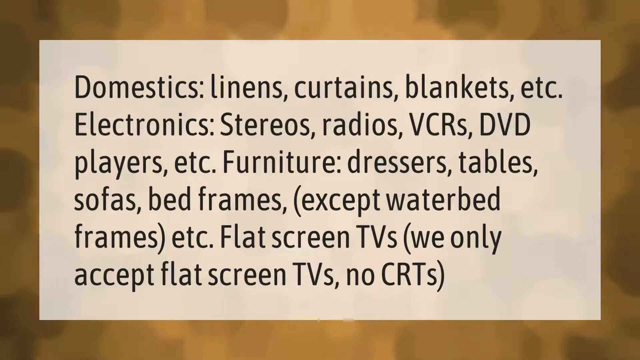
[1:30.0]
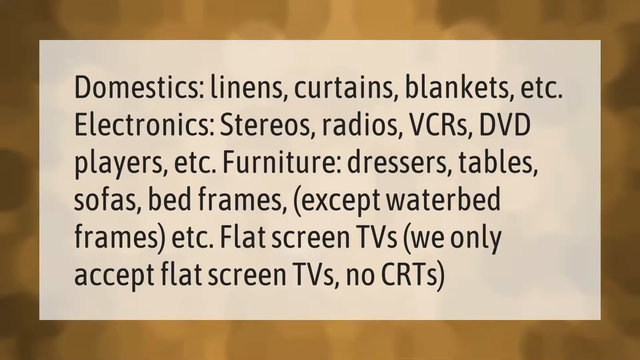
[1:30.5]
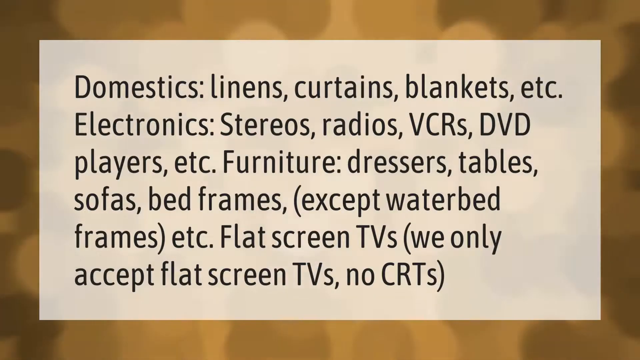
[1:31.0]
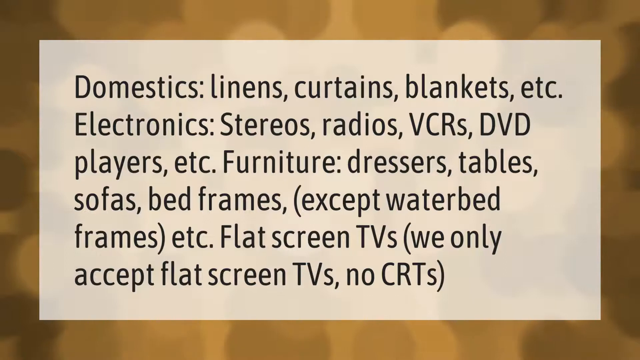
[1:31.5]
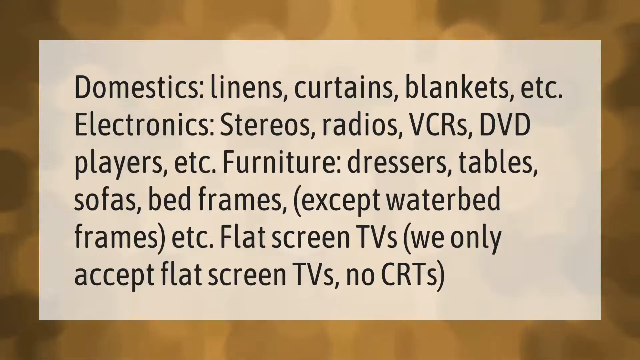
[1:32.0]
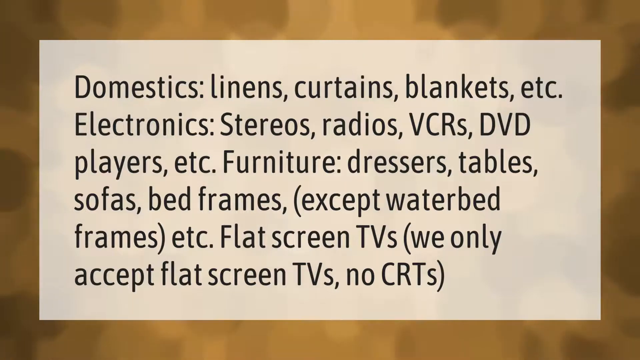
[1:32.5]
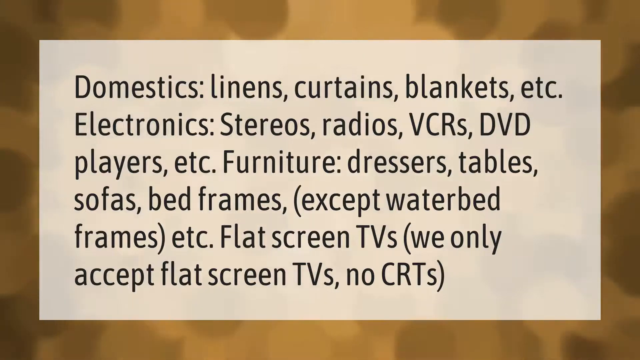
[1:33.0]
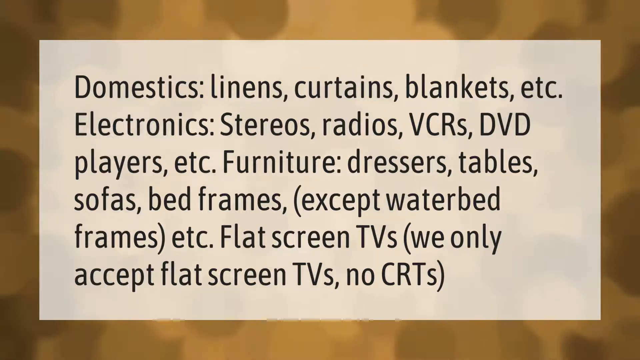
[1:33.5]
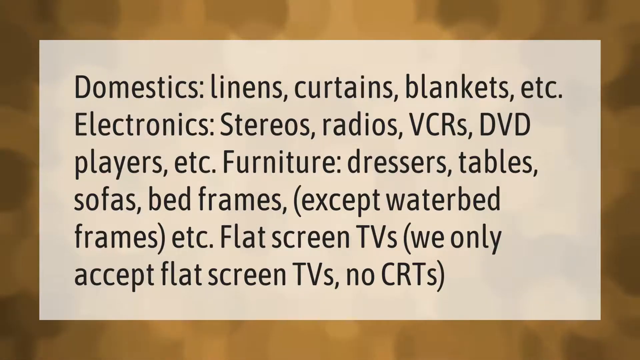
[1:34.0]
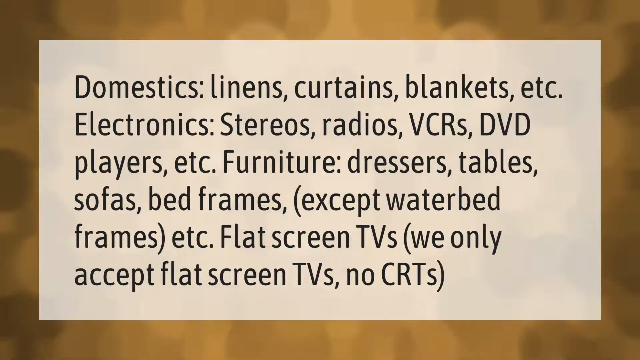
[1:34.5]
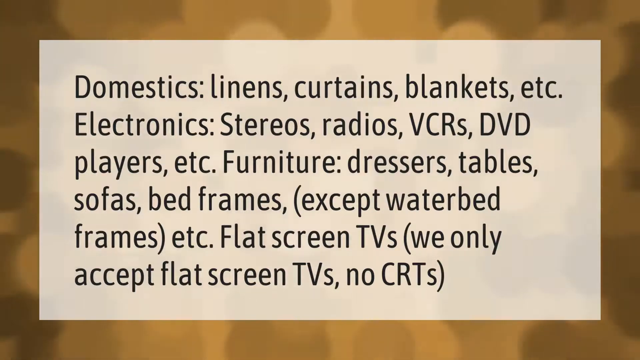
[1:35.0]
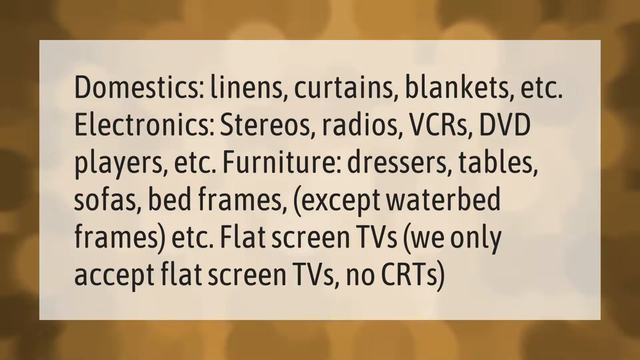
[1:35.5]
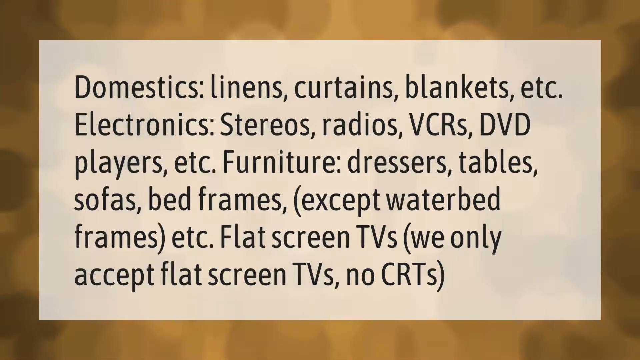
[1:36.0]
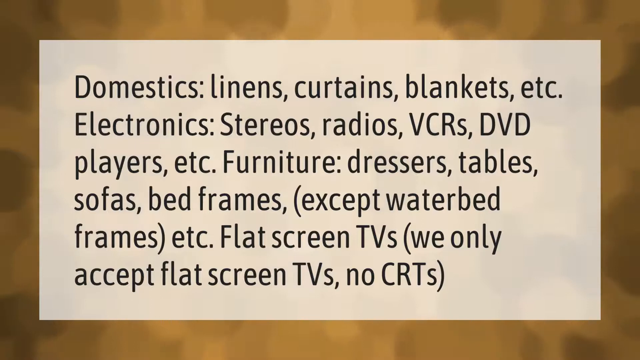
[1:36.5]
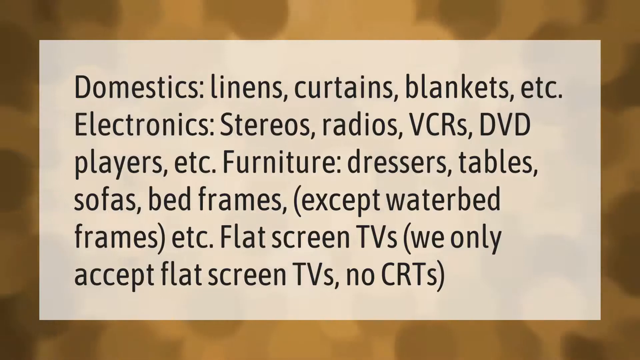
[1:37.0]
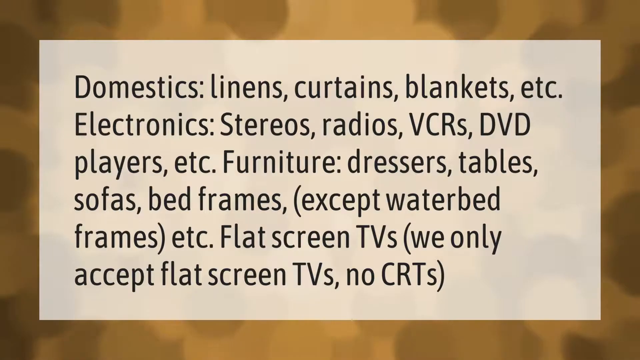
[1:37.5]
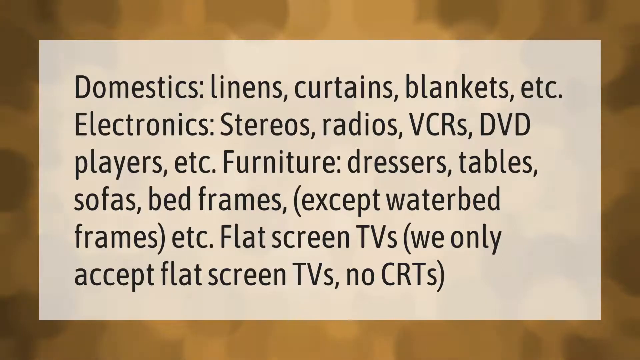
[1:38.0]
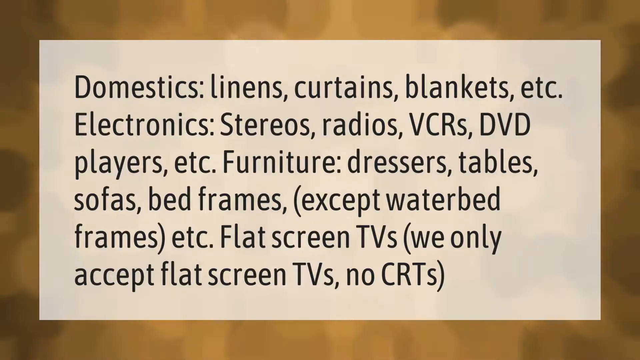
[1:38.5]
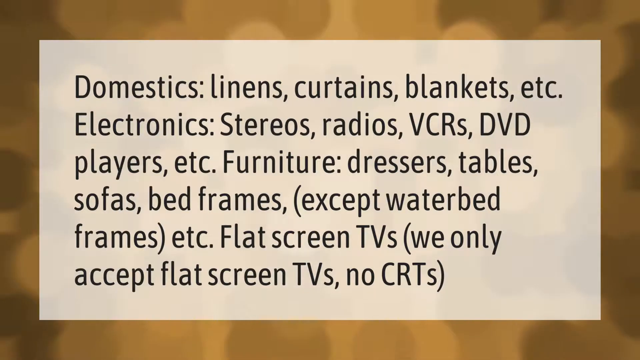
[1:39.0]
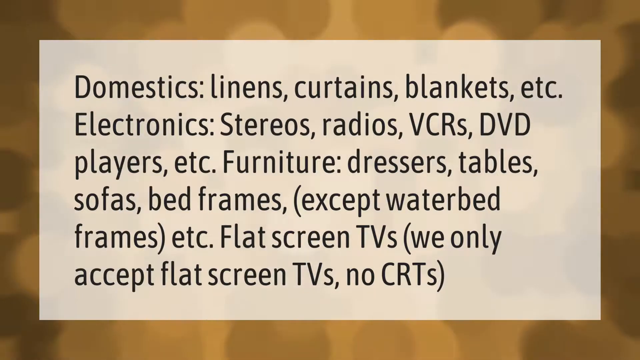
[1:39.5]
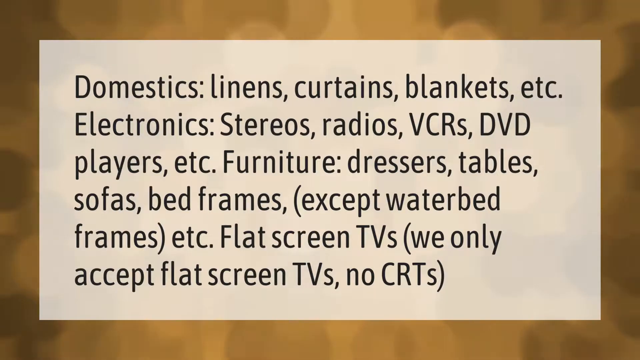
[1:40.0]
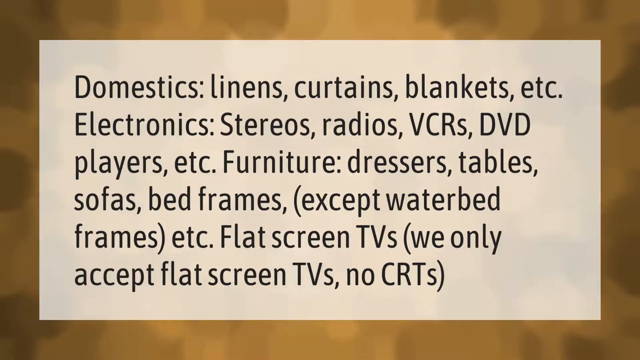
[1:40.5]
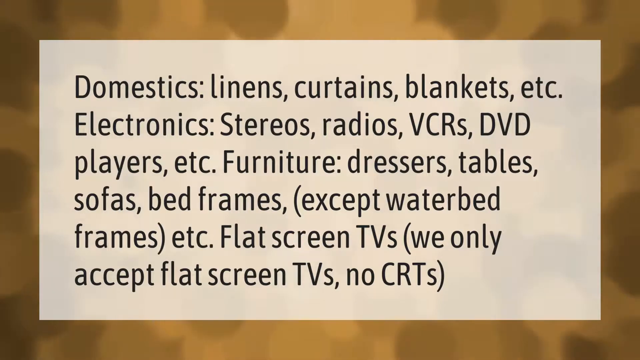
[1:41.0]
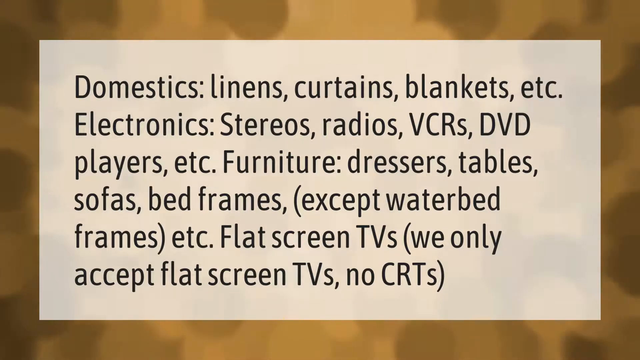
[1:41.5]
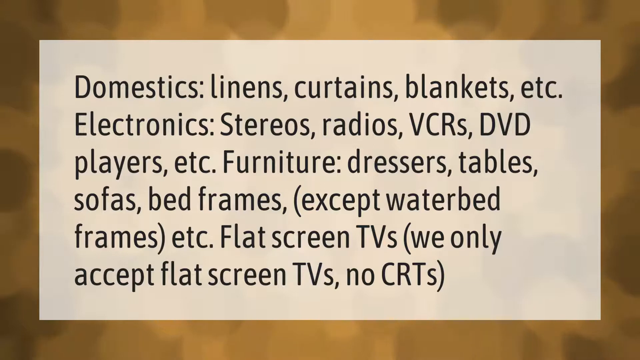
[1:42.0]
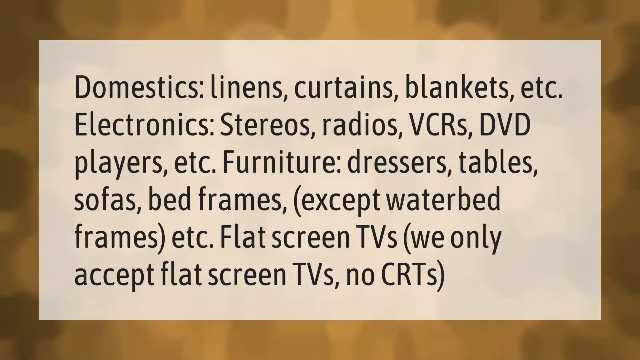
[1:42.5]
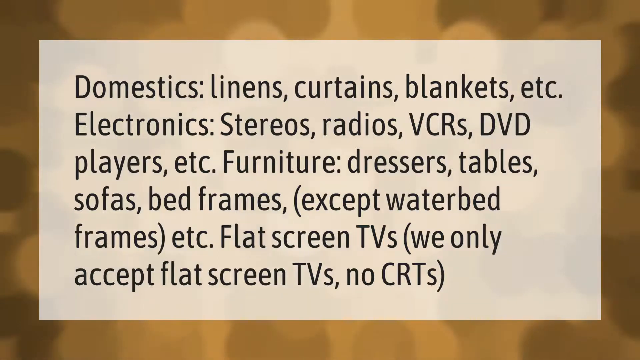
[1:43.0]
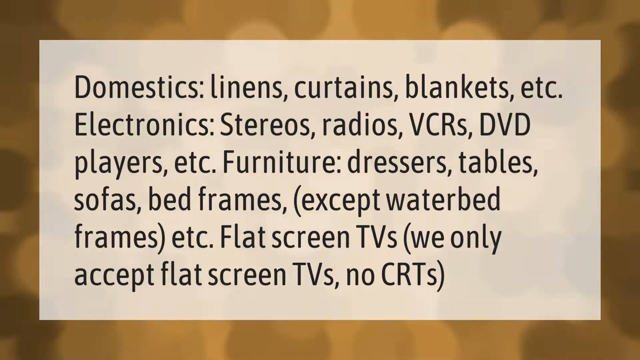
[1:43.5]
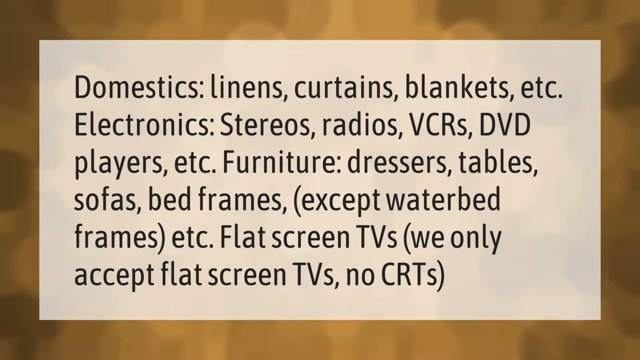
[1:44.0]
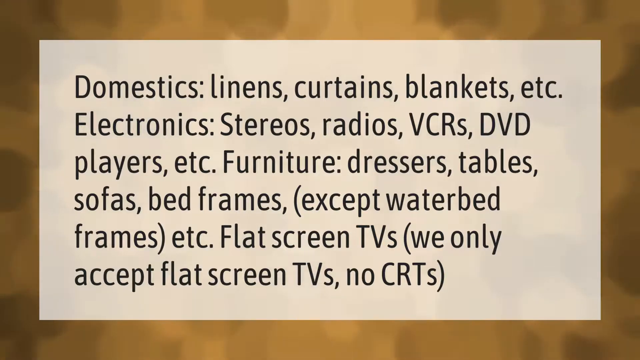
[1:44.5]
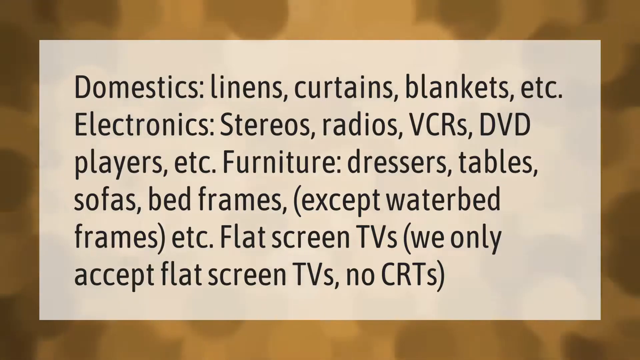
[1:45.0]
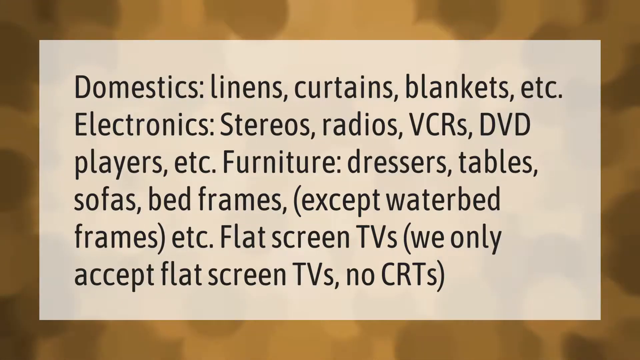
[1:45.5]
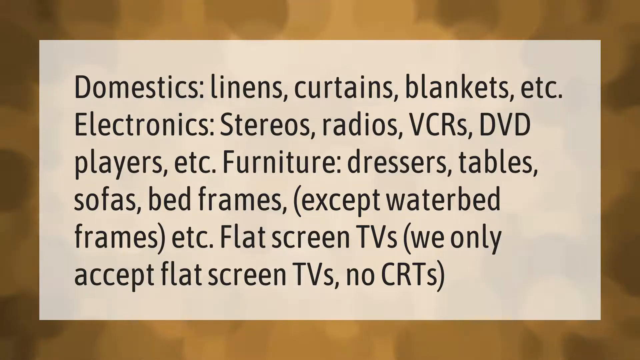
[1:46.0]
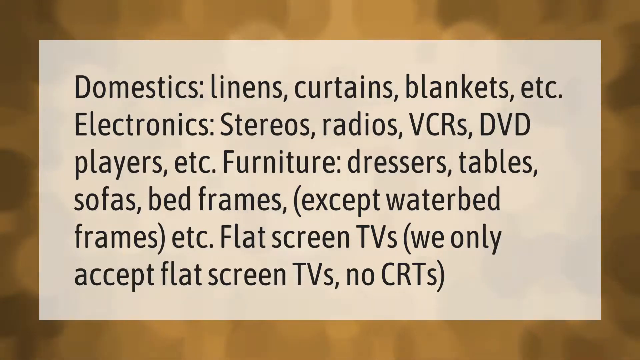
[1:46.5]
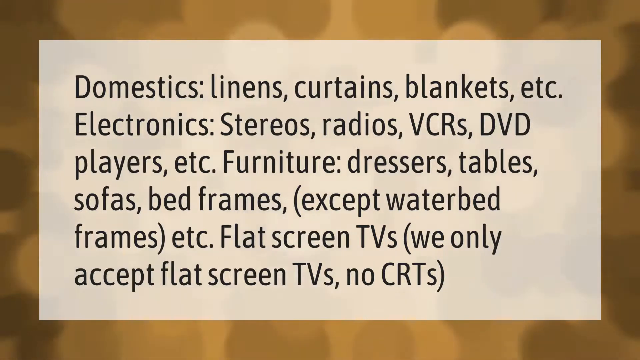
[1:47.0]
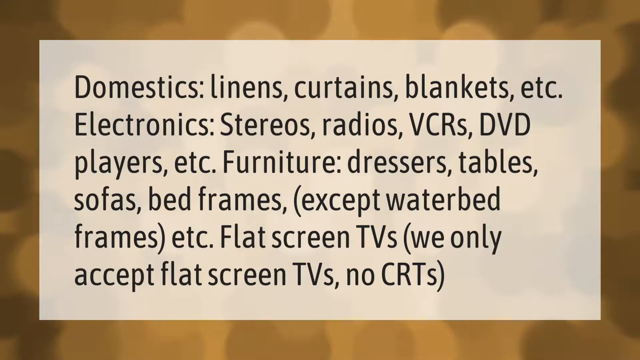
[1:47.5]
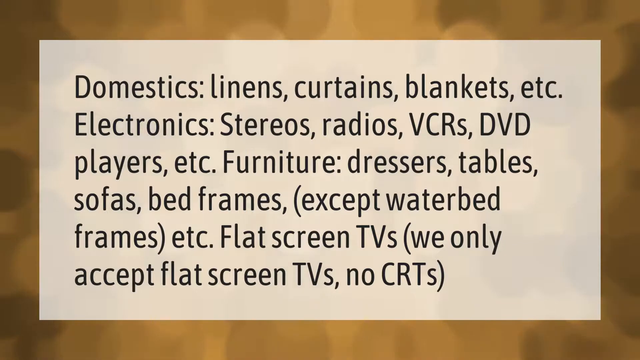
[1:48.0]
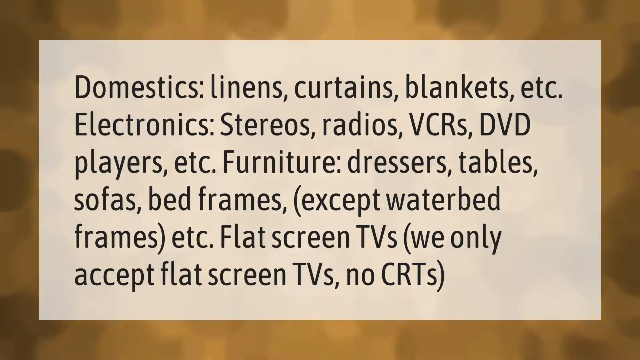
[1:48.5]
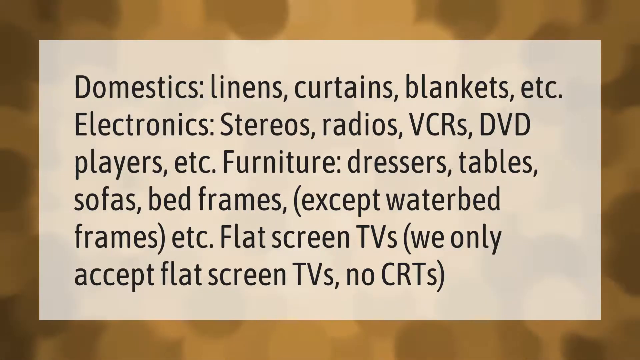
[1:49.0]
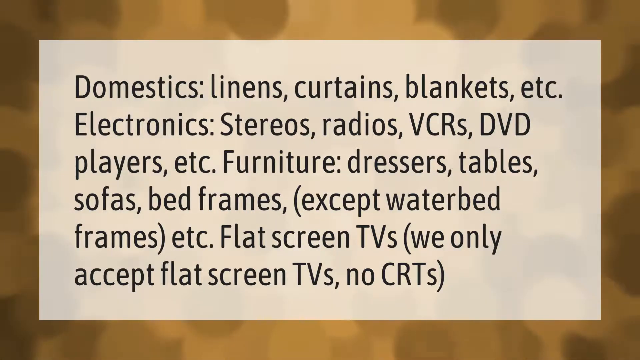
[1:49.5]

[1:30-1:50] The same text about what Goodwill accepts continues on screen, with nothing else shown.